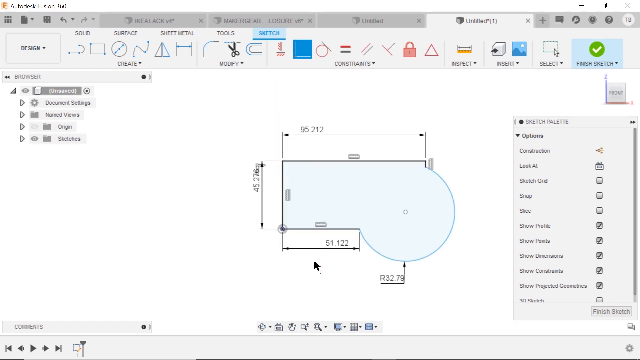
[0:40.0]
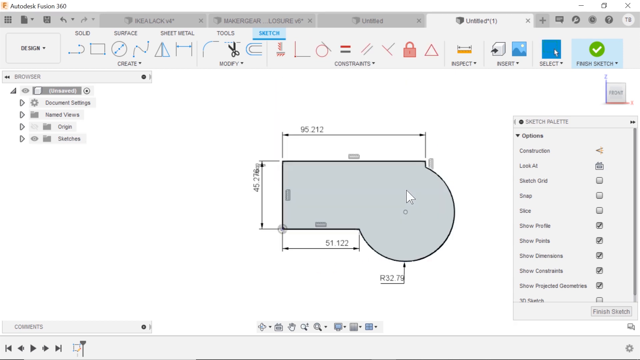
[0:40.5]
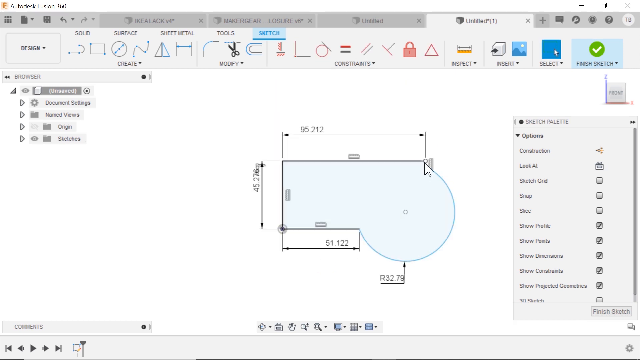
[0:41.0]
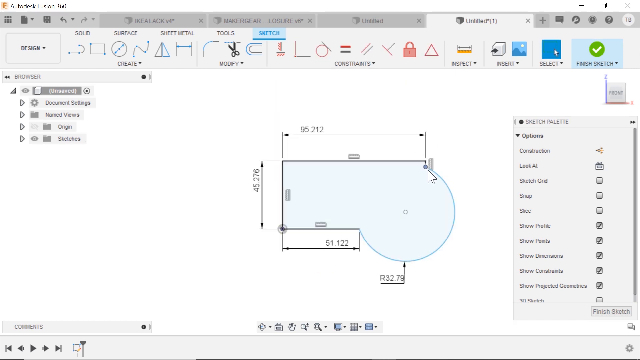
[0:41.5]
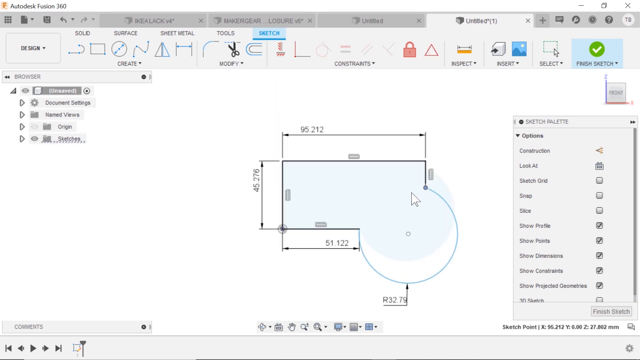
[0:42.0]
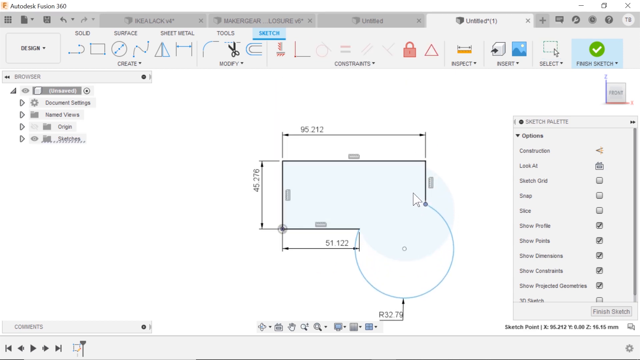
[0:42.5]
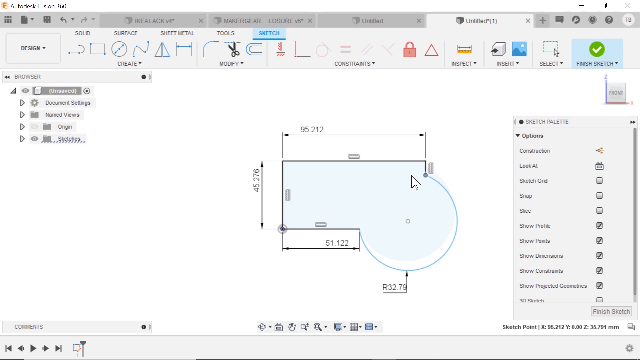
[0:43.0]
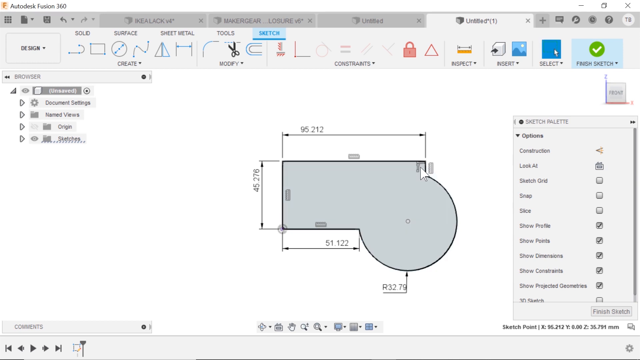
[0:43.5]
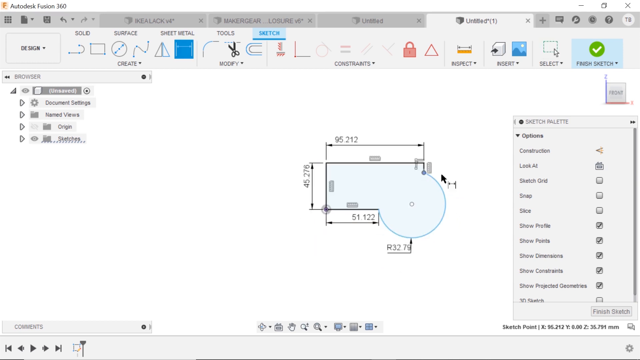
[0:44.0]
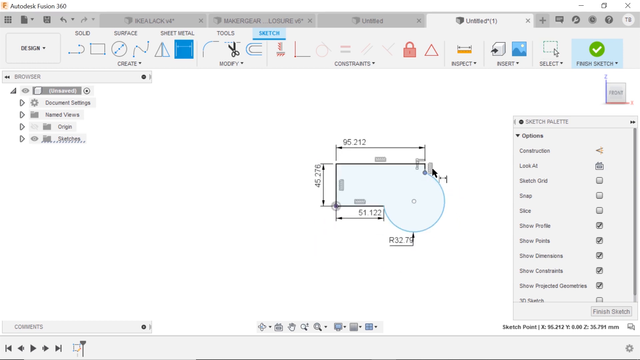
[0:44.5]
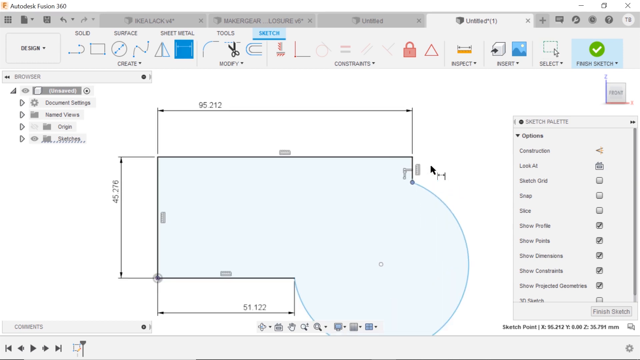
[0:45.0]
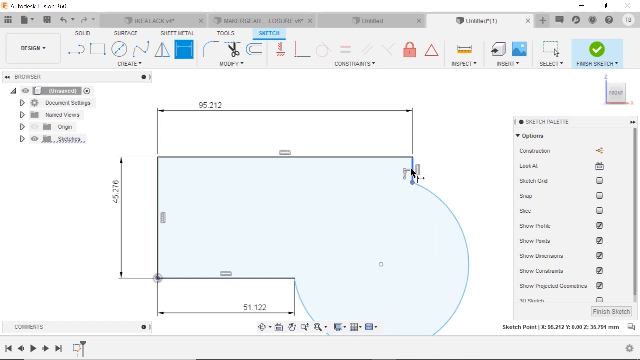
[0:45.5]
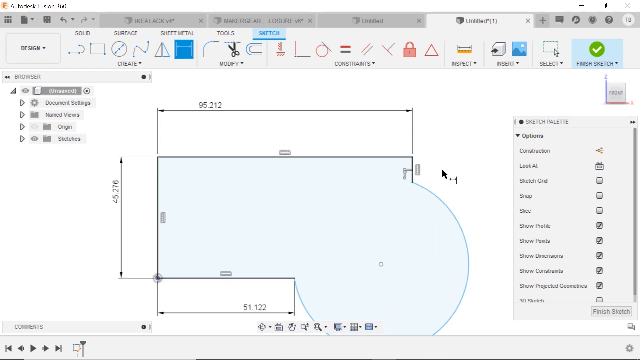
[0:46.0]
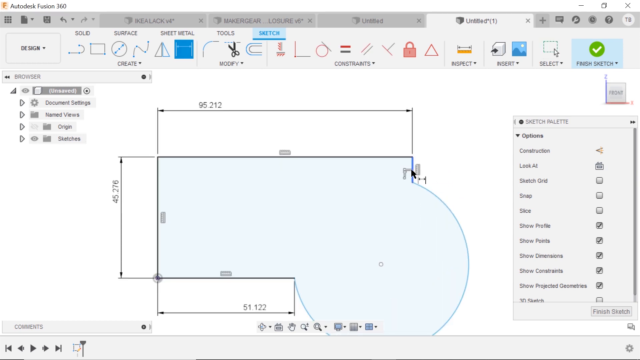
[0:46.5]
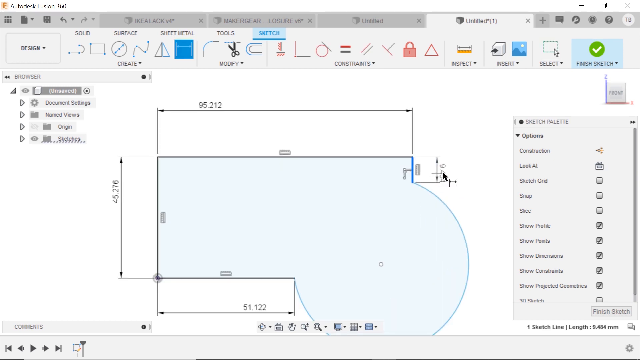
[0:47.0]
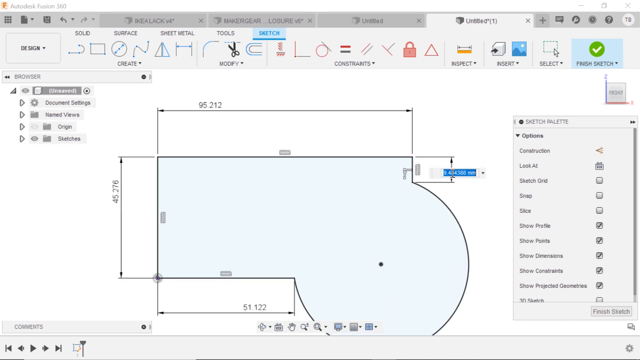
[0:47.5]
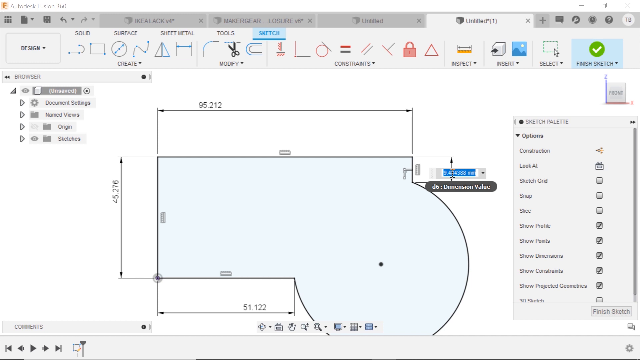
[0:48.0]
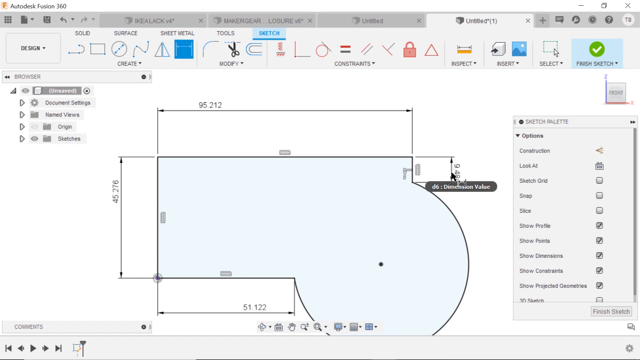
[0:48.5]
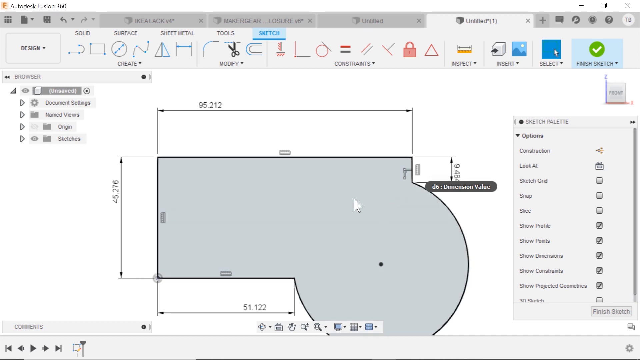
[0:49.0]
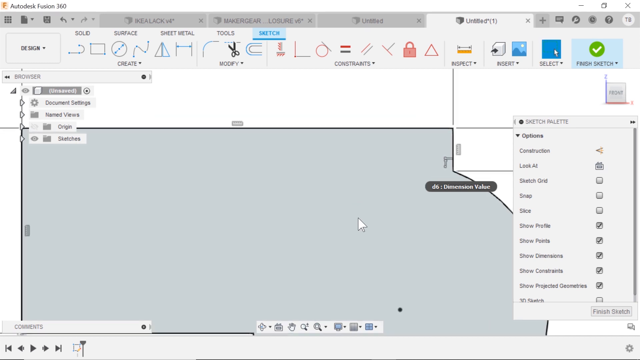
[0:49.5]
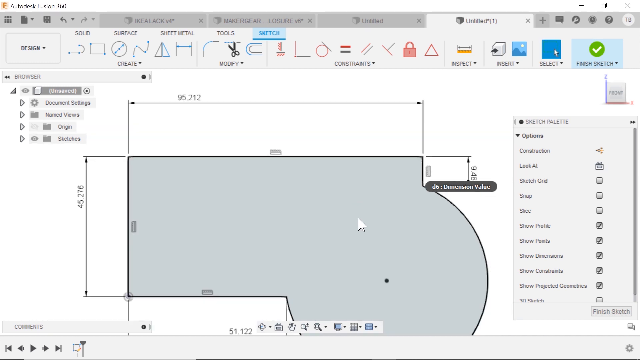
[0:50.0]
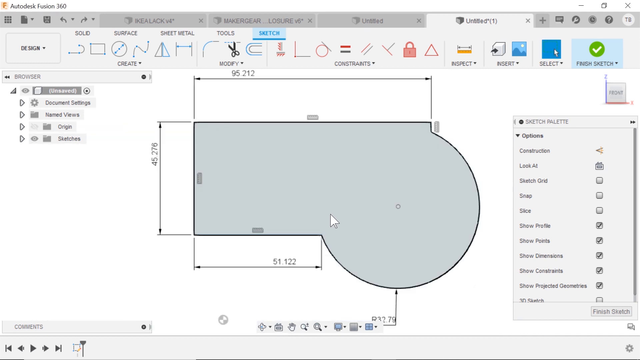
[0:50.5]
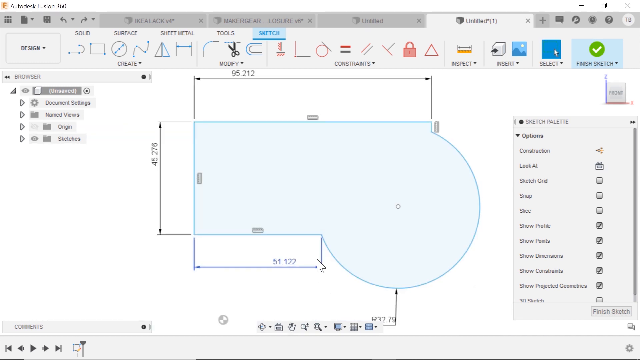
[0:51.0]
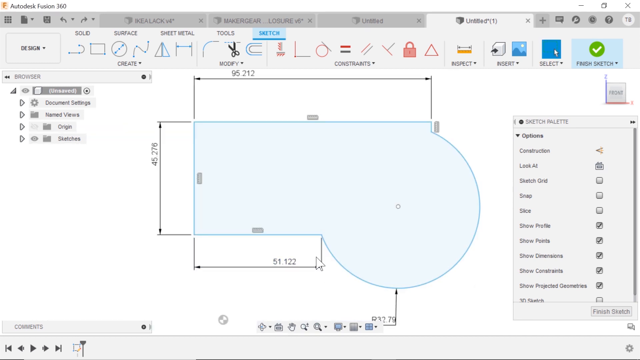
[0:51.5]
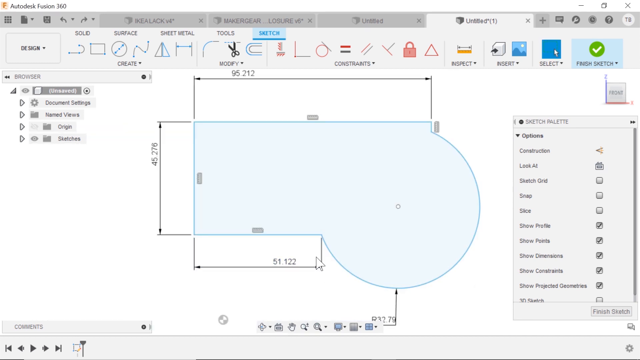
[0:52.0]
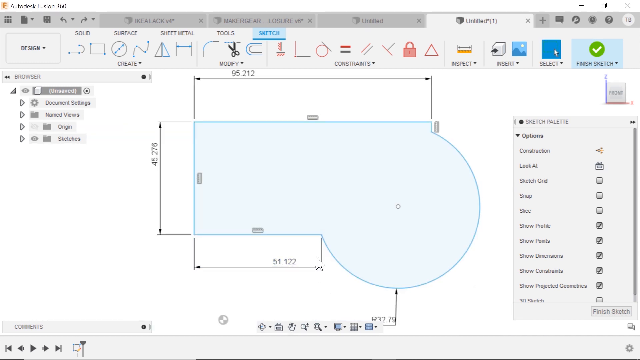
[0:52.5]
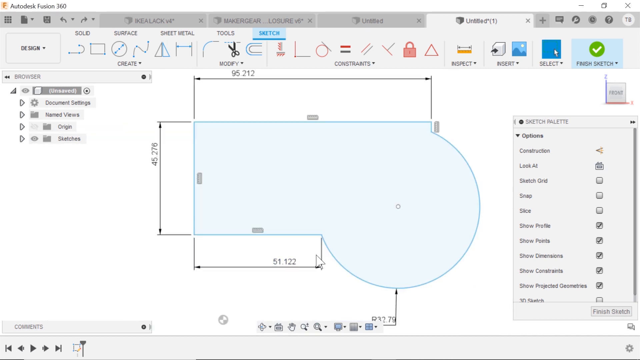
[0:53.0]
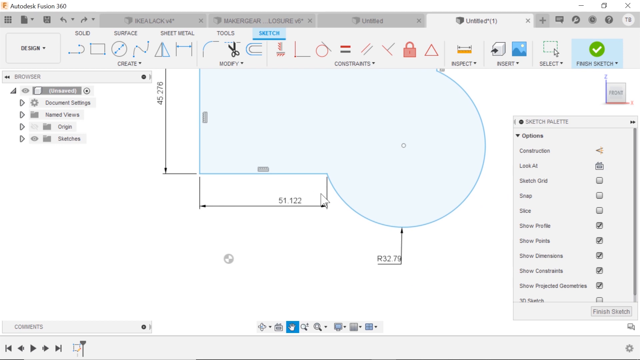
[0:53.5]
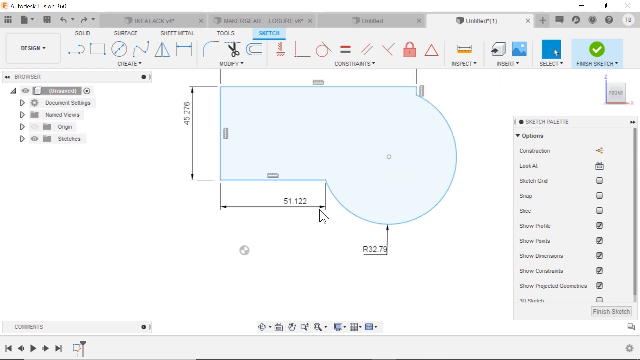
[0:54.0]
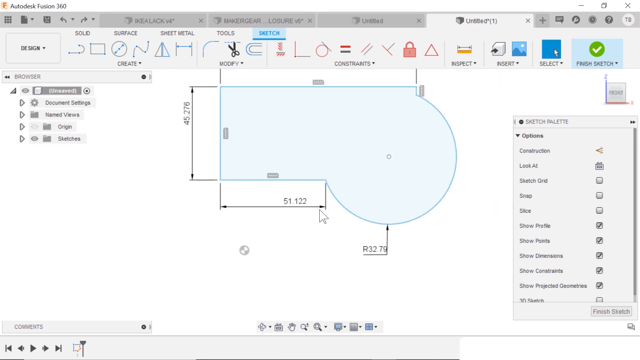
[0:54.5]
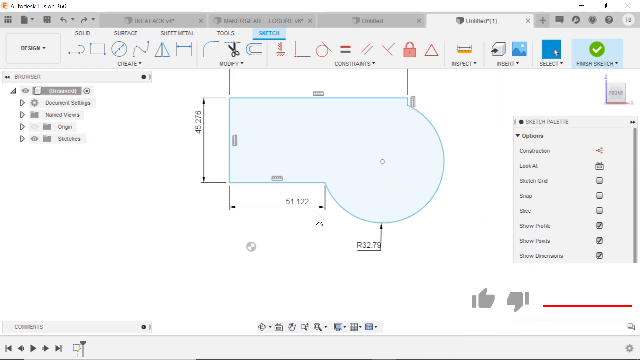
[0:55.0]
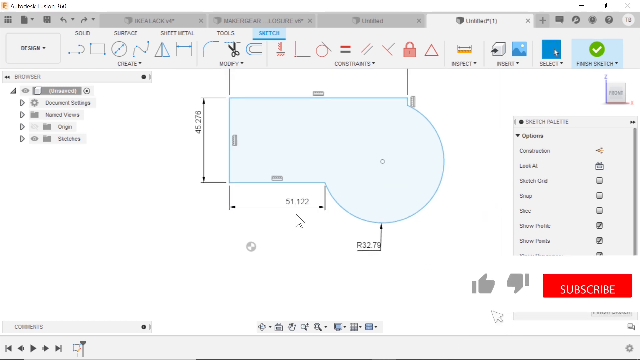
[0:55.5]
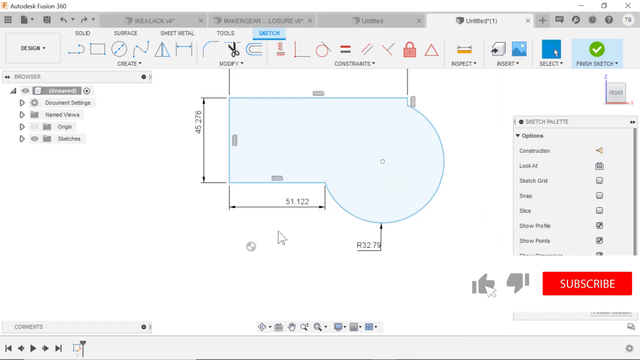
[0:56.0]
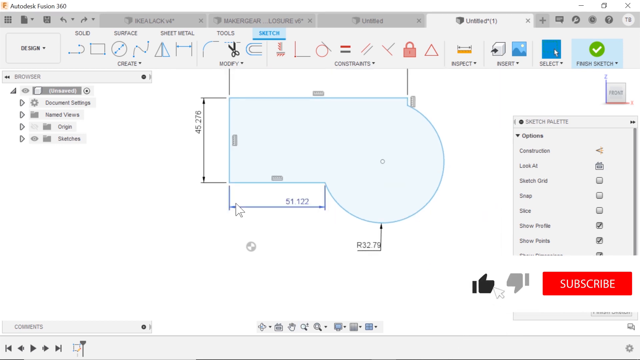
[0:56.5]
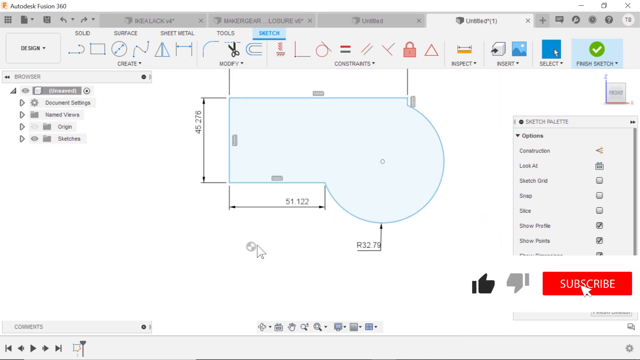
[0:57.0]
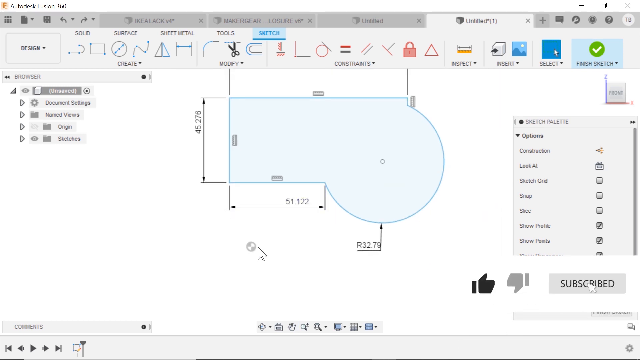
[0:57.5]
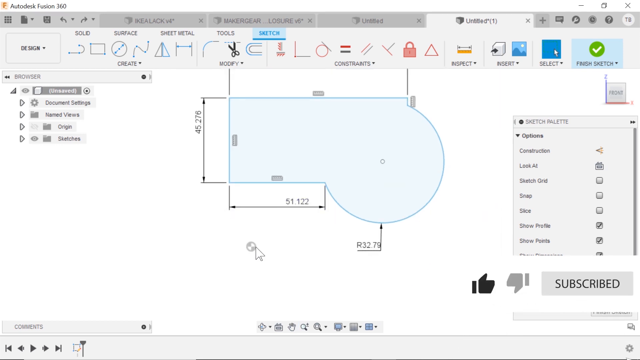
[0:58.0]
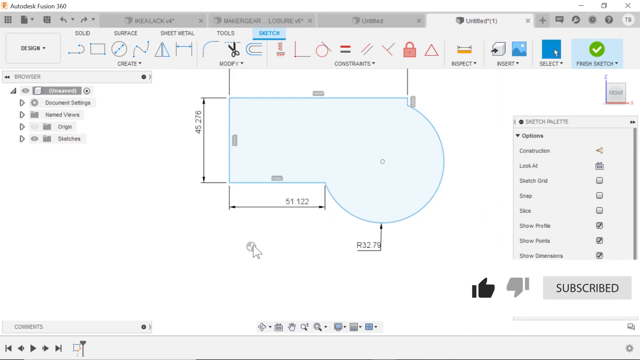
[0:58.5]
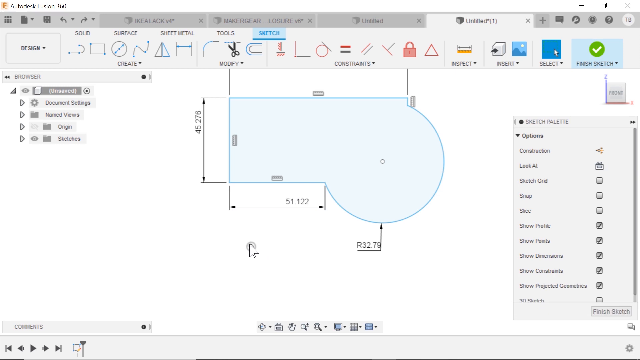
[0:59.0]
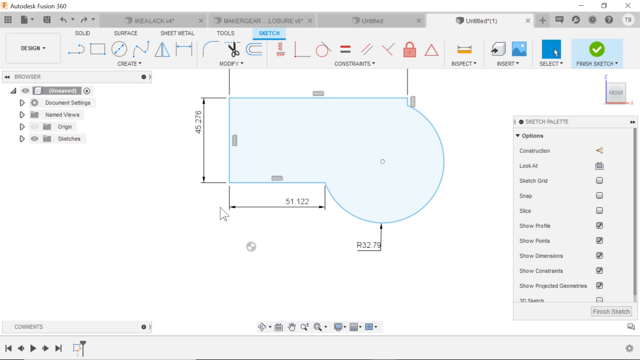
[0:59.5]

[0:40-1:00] The mouse continues hovering over the shape. When it hovers over a point where two lines connect, that point becomes a circle. The user appears to click that circle and drag it down, bringing the line down vertically and changing the shape. The view zooms in and out of the shape, and other controls are visible around it. With the mouse in the upper right corner of the diagram, the user appears to measure the height of one of the segments, the top right corner portion, and seems to drag something out that brings the measurements out to the side of the diagram. The diagram is then dragged upward and zoomed out so it gets smaller and fits on the screen. In the lower right corner, a red button with "subscribe" in white text appears, with a thumbs up and a thumbs down icon next to it. The mouse clicks the button and it turns gray, then clicks the thumbs up icon, which turns black, and the element scrolls down out of view. Meanwhile, the mouse keeps interacting with the diagram.